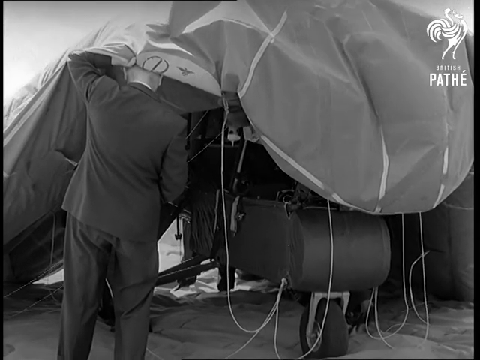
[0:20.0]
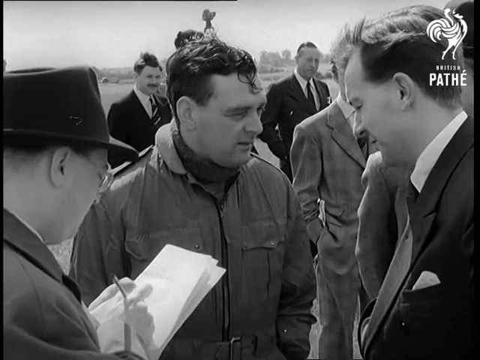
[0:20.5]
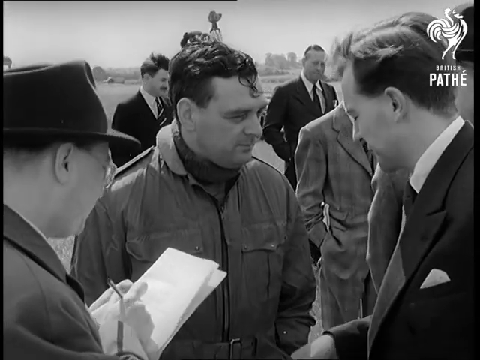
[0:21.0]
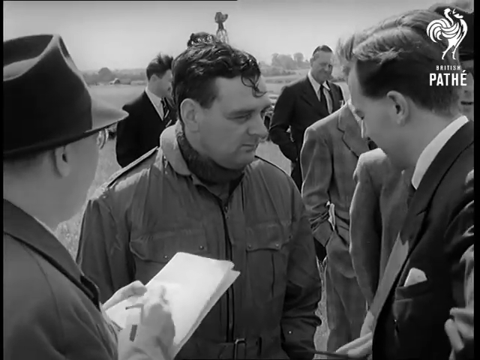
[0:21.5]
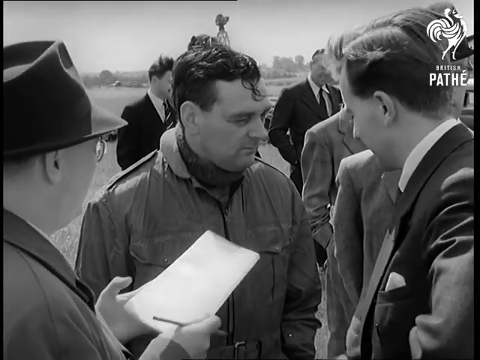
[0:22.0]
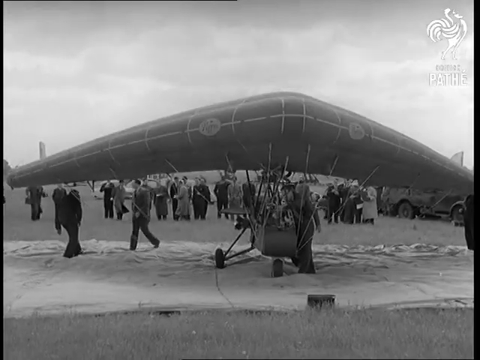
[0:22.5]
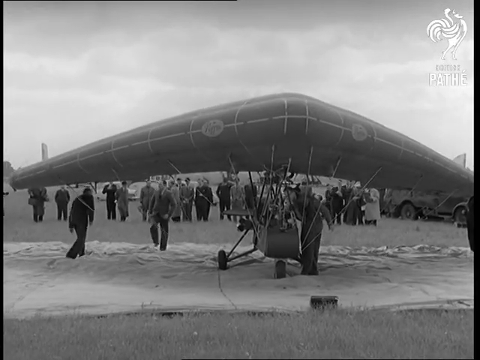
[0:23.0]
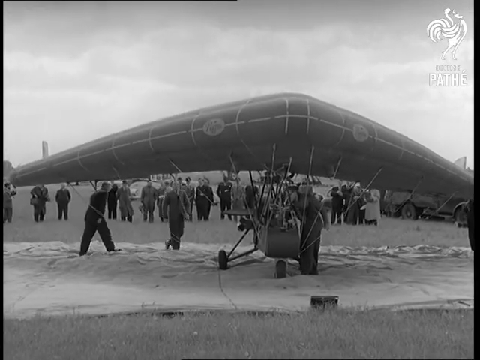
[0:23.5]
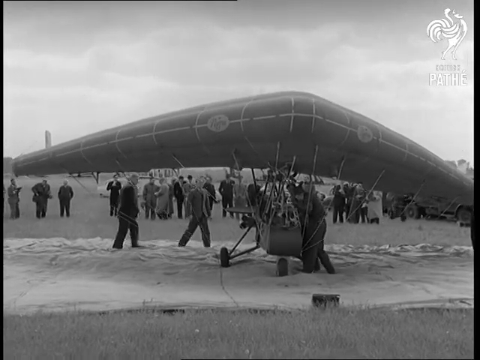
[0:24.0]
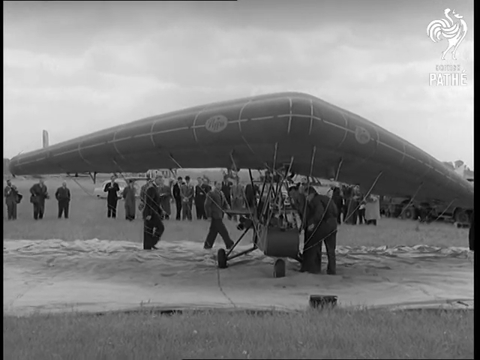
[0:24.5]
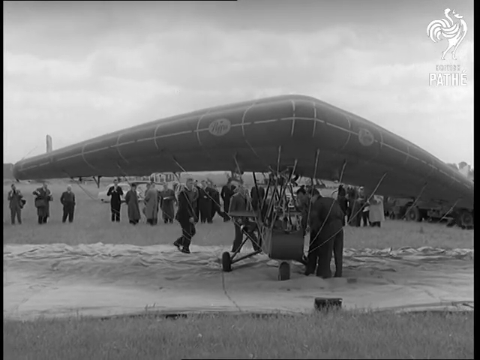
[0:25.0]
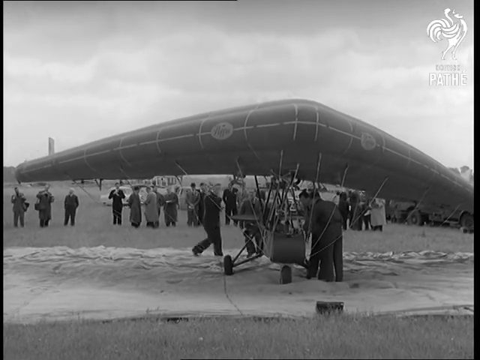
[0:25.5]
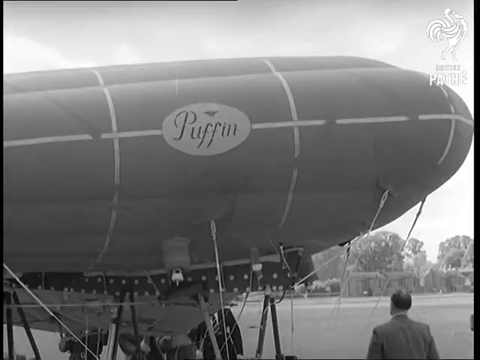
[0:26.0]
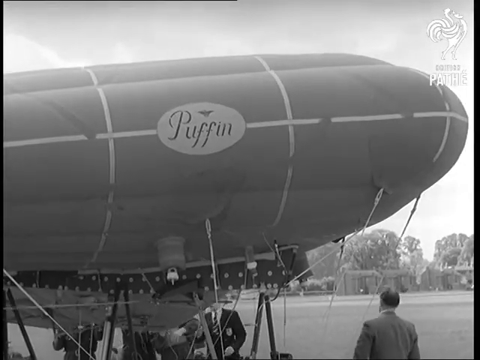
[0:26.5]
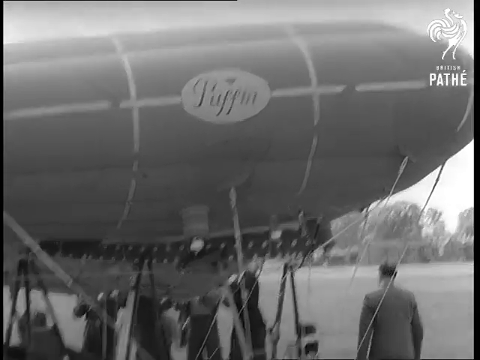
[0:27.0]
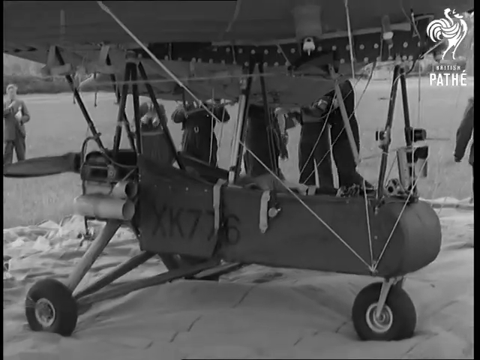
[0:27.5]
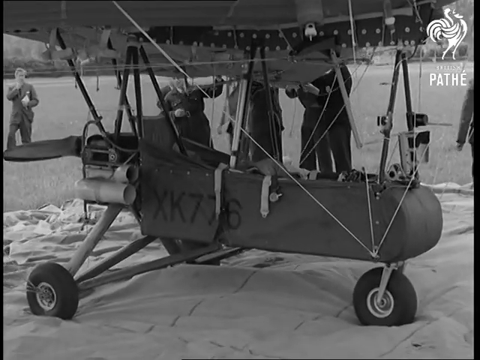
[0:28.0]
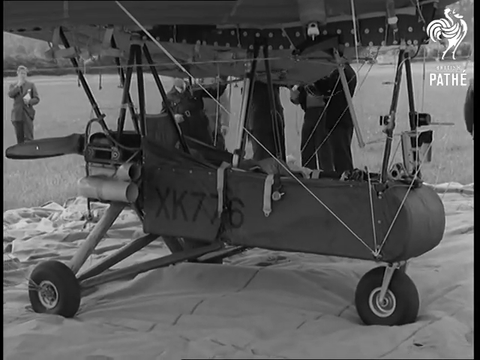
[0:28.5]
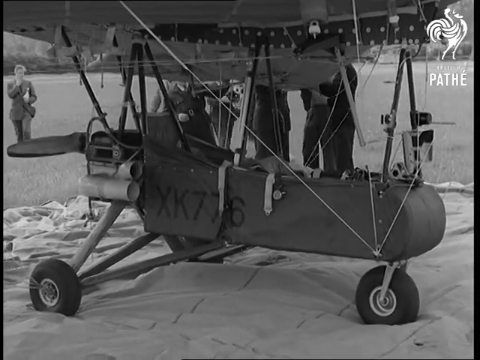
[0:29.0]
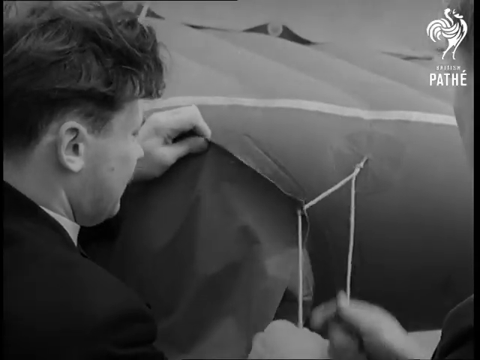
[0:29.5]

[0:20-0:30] A man in a sort of jumpsuit is being interviewed by men in business suits. One man has a handkerchief in his chest pocket, and another, standing to the left, wears a hat and holds sheets of paper in one hand and a pencil or pen in the other. At least three other men in business suits stand in the background, while the man in the center wears a jumpsuit. A wide-angle shot then shows the earlier object, apparently a large inflated object that looks like a V-shaped wing, attached with strings to some kind of equipment on the ground that has wheels. A gathering of people is in the background. About three men are in the foreground: one stands by the equipment, and the other two, off to the left, walk toward the equipment and to the center underneath the inflated wing. A closer shot of the inflated object shows a tag on its side that says "Puffin", and stripes: one running horizontally and three running vertically, about equally spaced apart. The bottom of the object is attached to some kind of vehicle with three wheels, one in the front and two in the back, and some kind of motor in the back. Other men adjust the inflated structure, pulling on ropes threaded through a grommet hole at one end of the fabric.